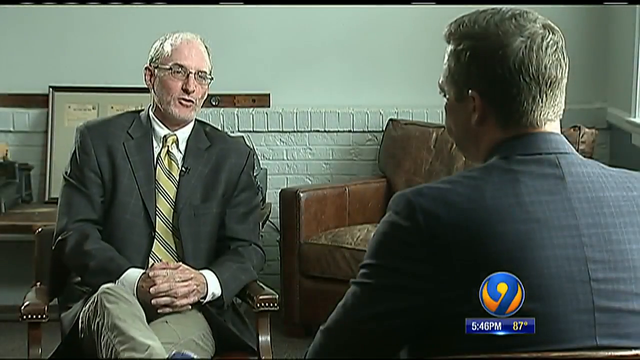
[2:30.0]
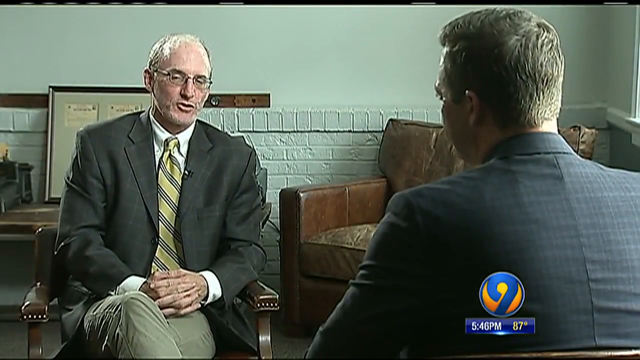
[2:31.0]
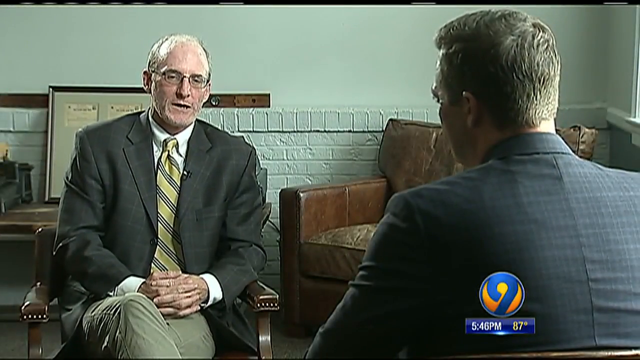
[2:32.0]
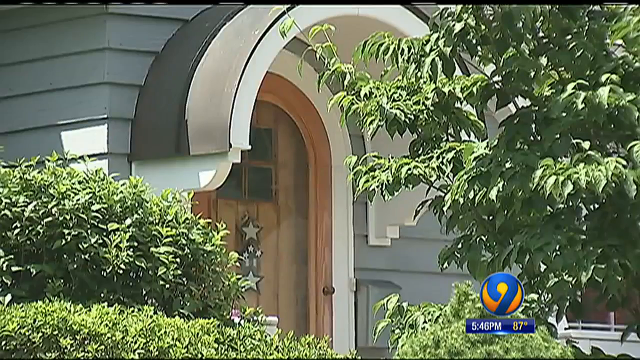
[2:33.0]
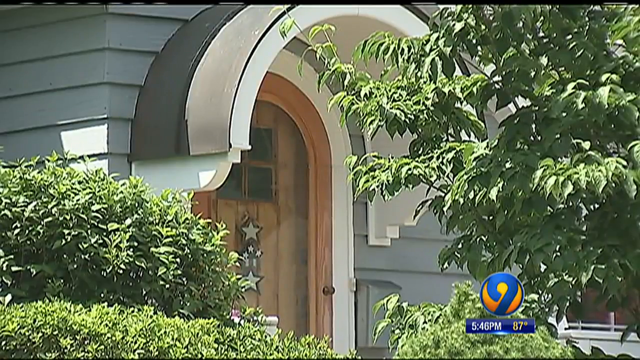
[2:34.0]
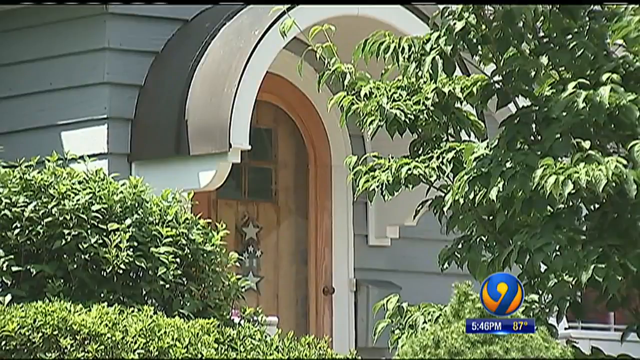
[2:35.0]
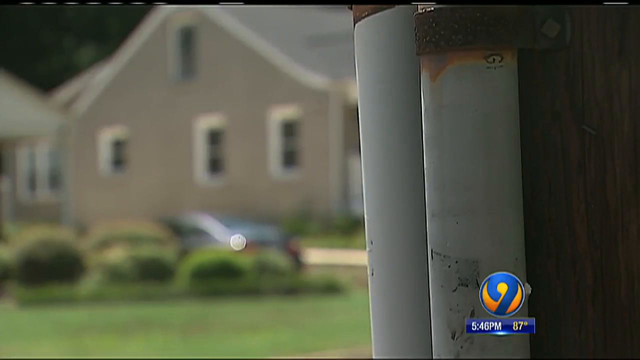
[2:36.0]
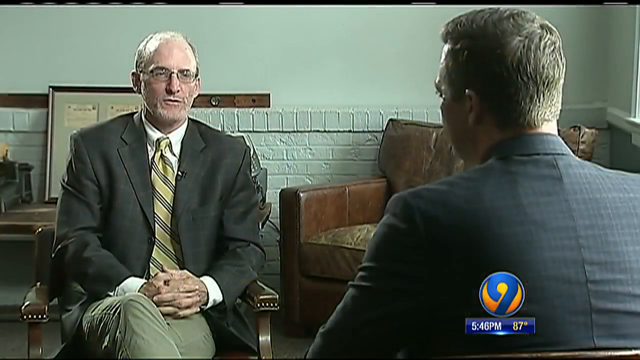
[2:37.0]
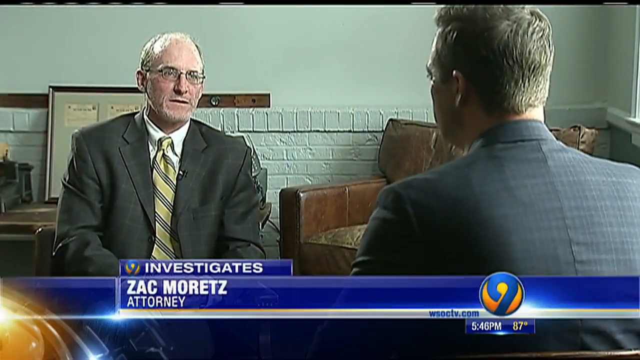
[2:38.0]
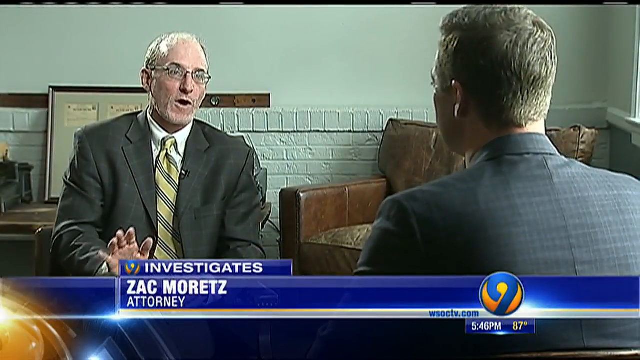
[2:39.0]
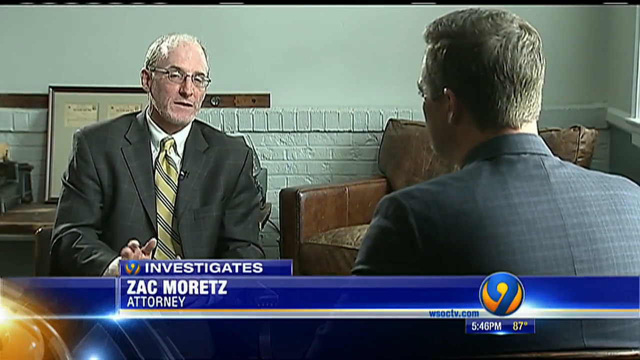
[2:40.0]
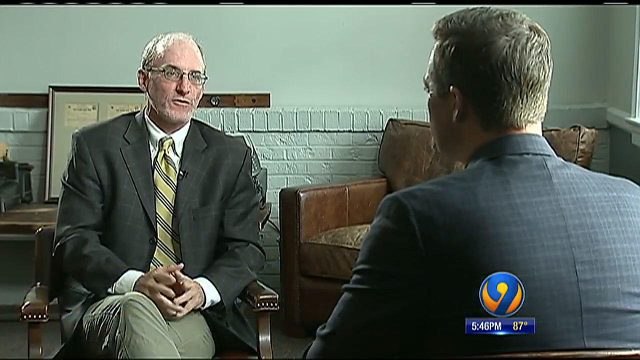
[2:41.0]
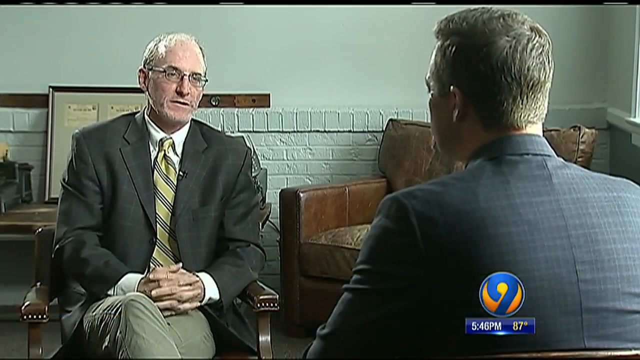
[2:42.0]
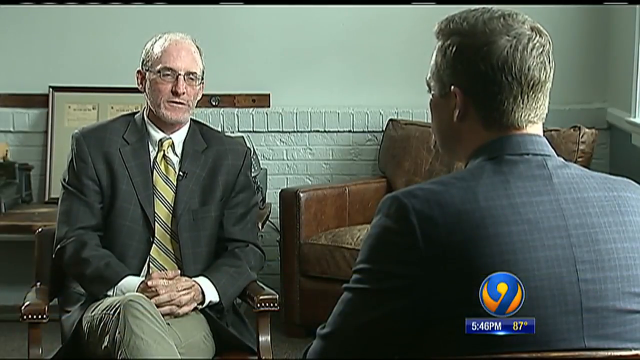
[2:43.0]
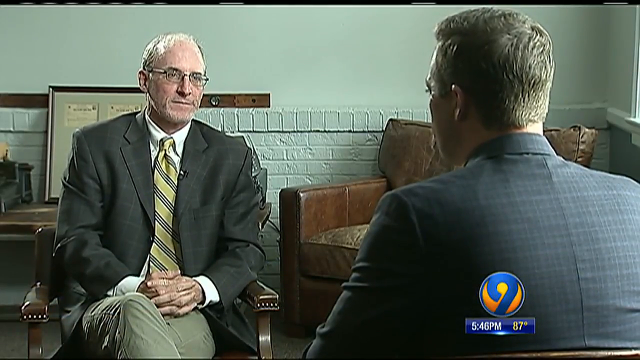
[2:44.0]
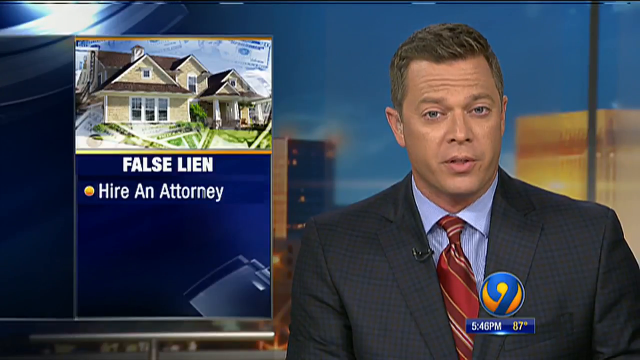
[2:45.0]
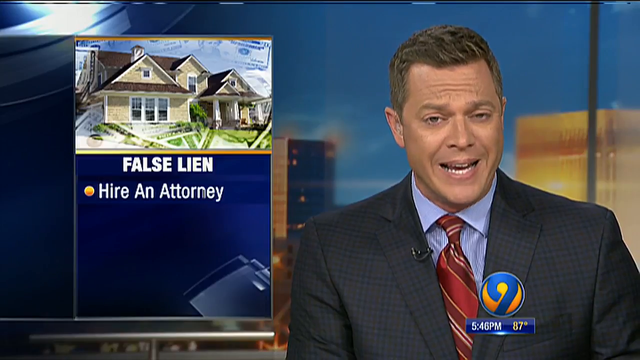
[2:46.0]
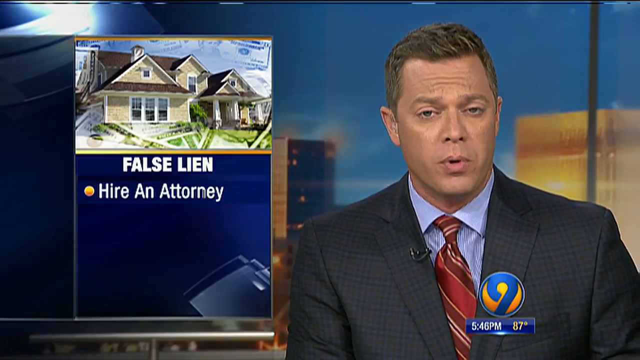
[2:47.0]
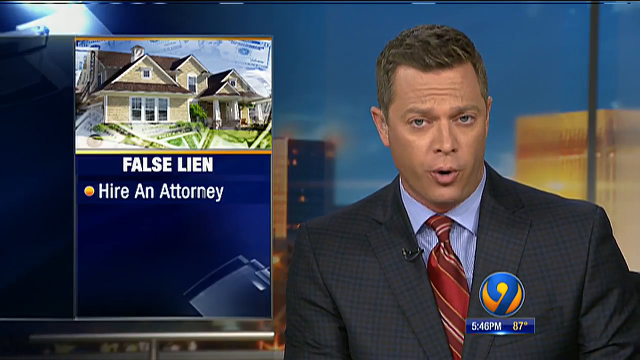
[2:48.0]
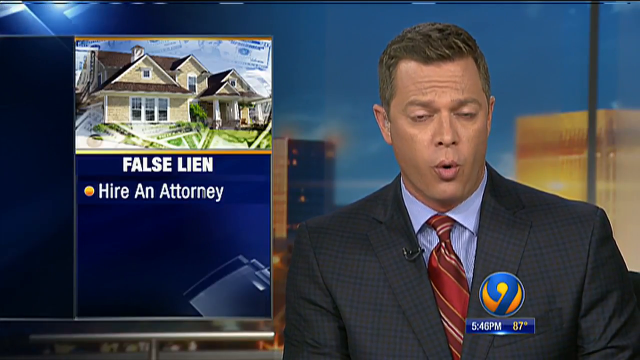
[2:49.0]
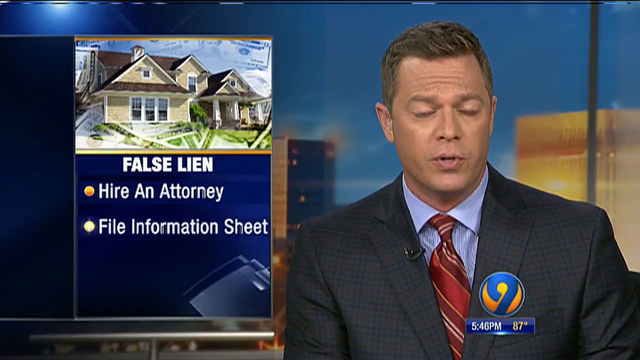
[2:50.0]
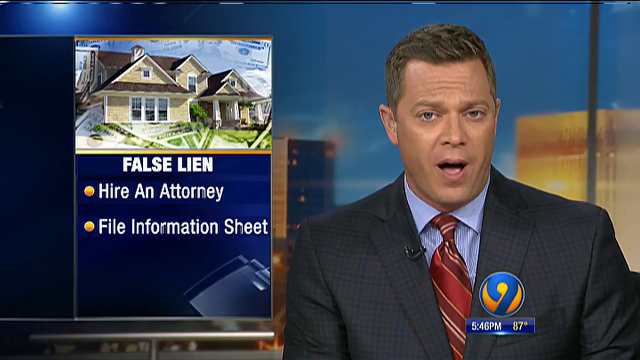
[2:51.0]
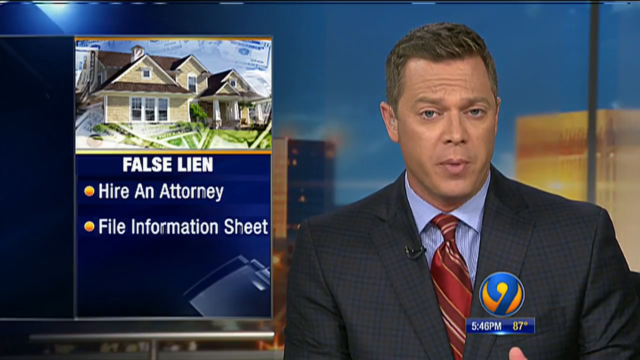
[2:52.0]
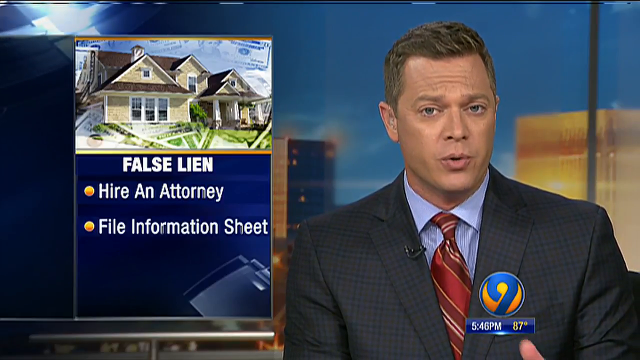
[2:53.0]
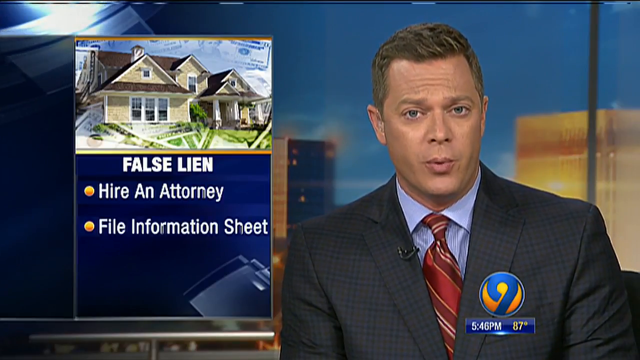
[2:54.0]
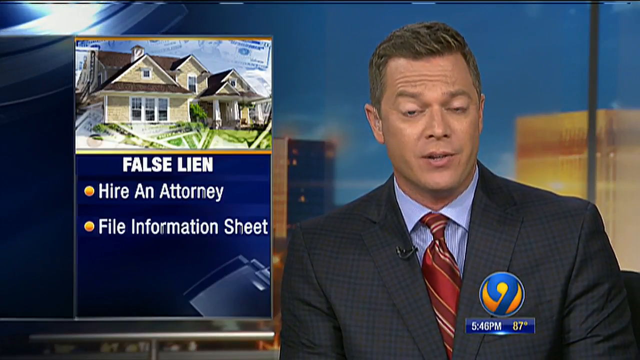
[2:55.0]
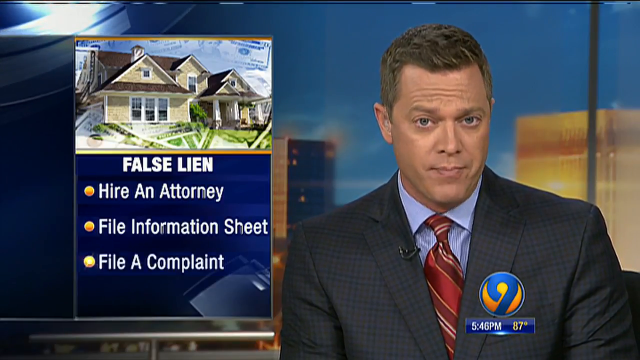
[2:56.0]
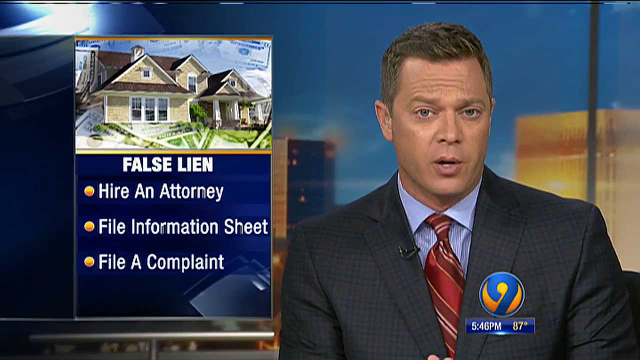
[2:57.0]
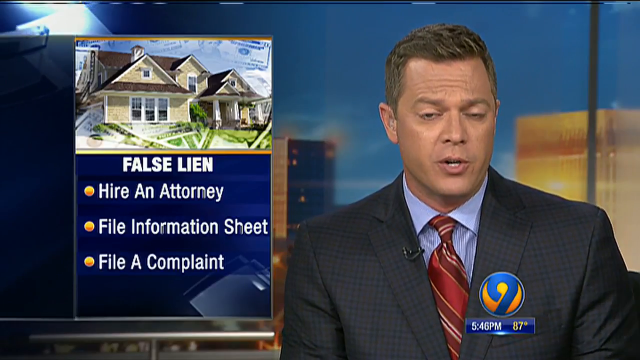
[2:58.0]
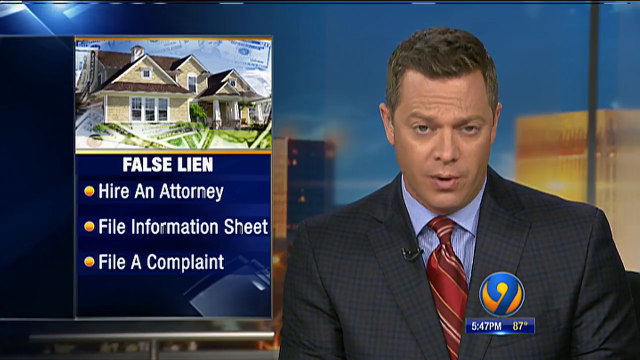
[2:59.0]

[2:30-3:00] The man apparently a lawyer is shown very briefly, and then the video returns to him. He is identified as Zach Moretz, an attorney. Apparently liens have been put on people's houses, and text states it is a false lien. Bullet points appear: "hire an attorney," "file an information sheet," and "file a complaint."